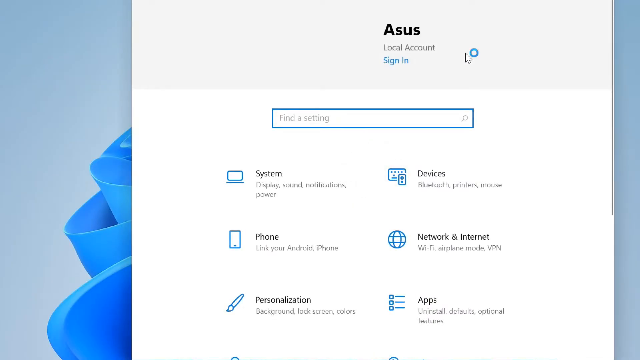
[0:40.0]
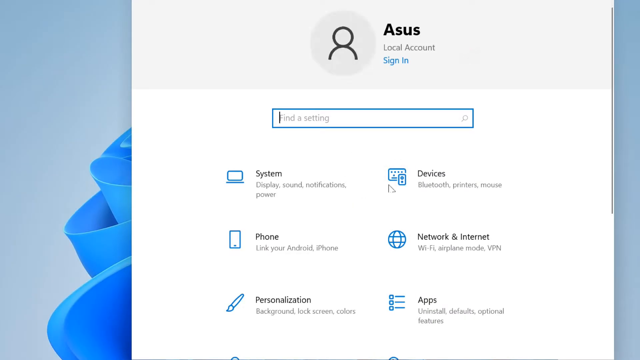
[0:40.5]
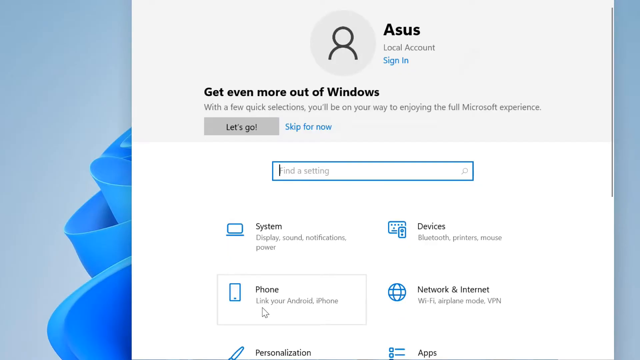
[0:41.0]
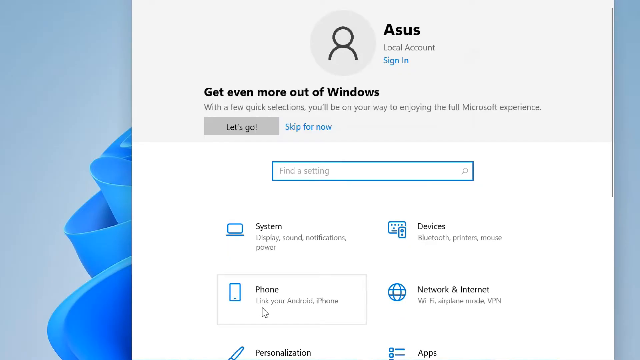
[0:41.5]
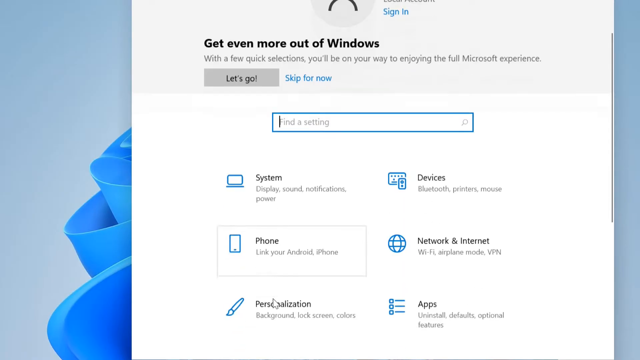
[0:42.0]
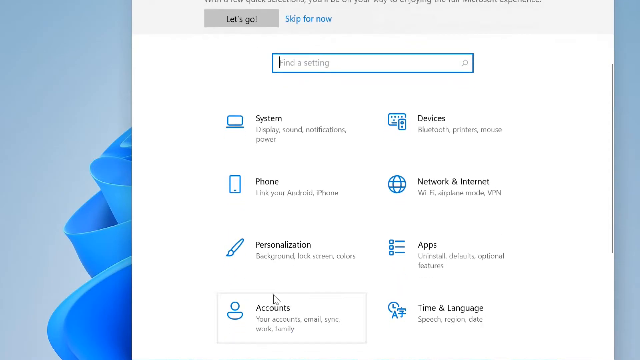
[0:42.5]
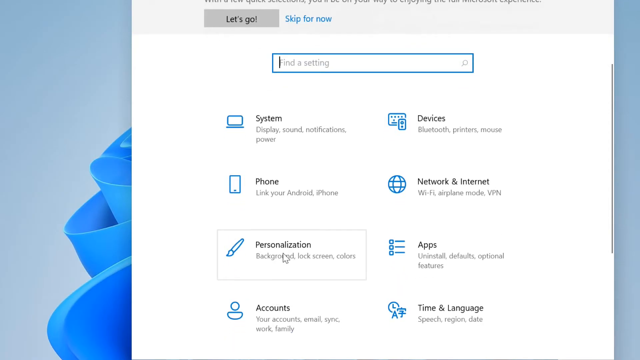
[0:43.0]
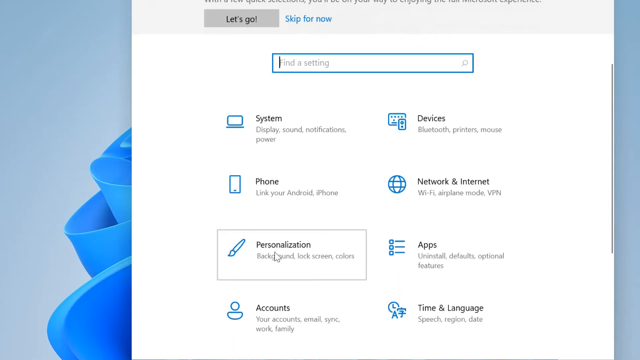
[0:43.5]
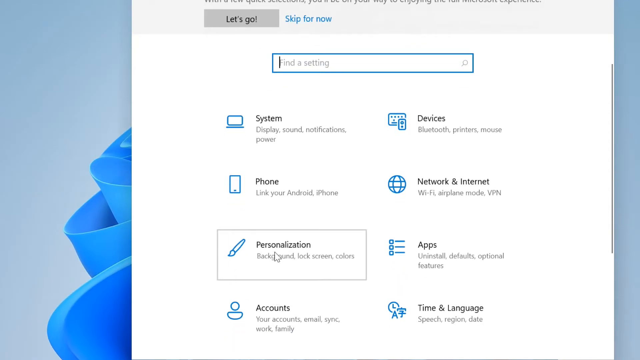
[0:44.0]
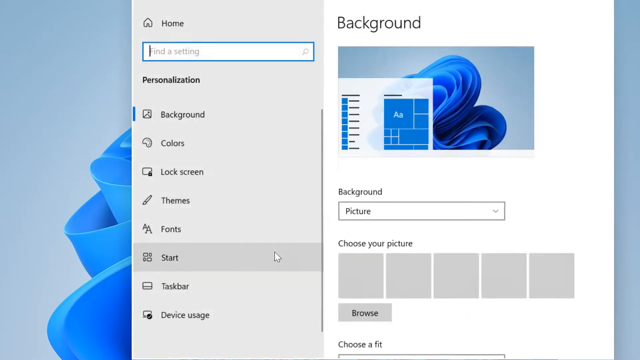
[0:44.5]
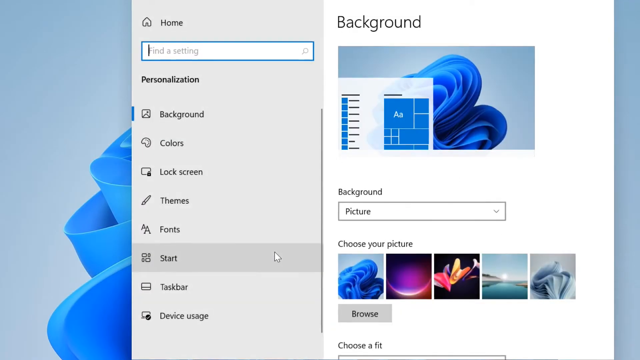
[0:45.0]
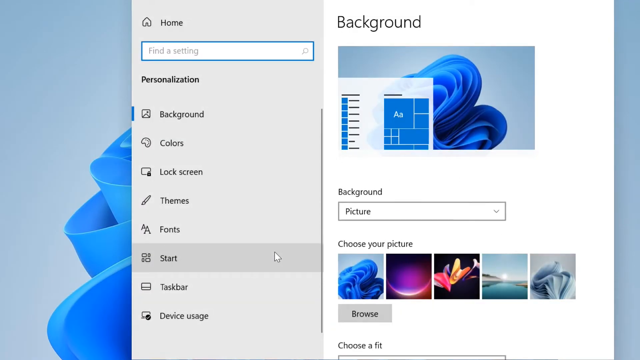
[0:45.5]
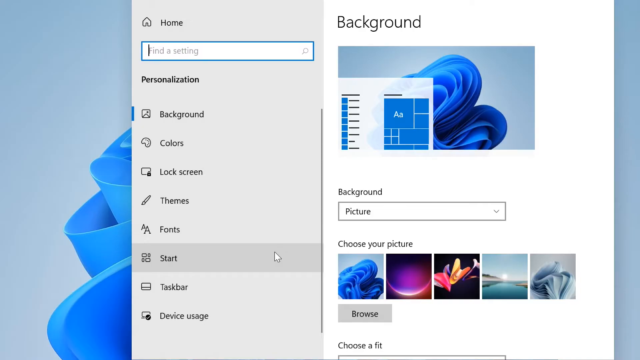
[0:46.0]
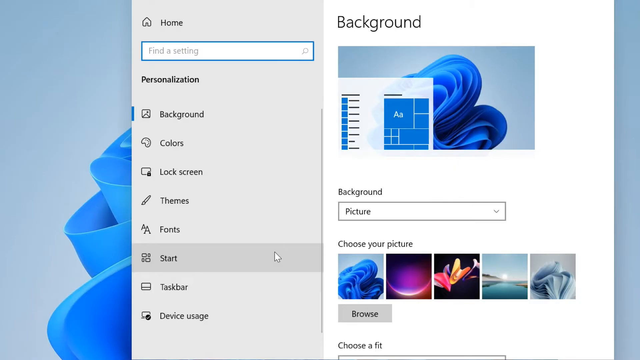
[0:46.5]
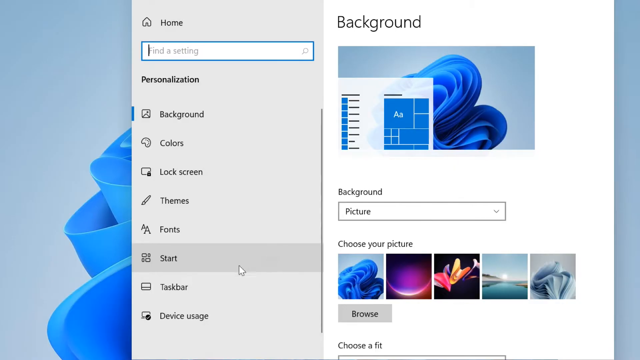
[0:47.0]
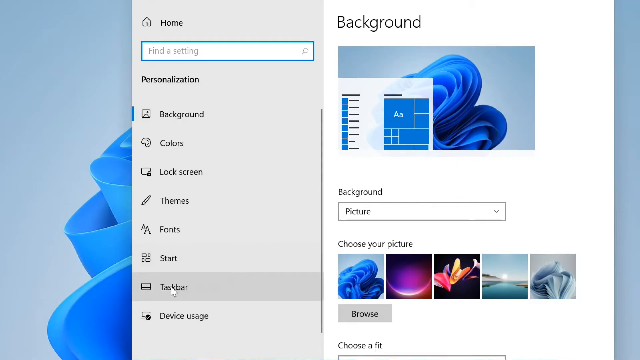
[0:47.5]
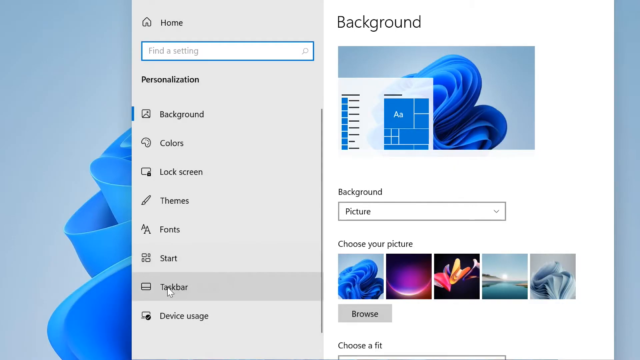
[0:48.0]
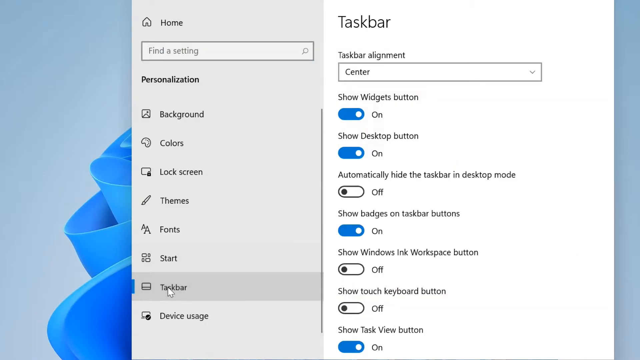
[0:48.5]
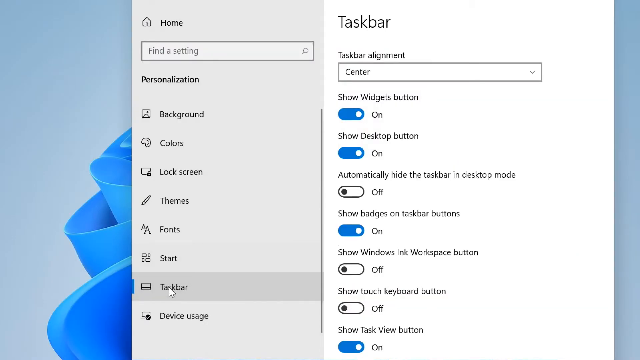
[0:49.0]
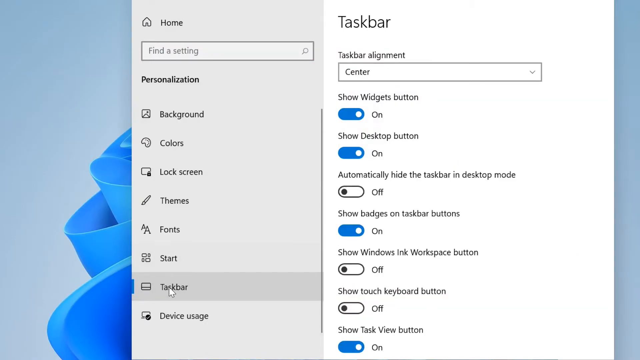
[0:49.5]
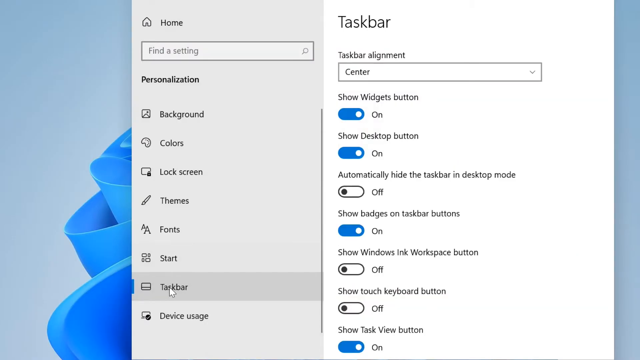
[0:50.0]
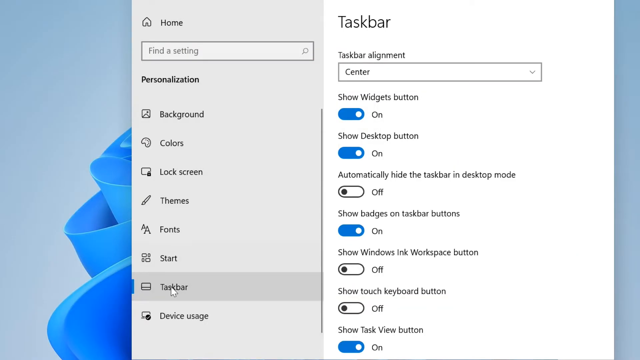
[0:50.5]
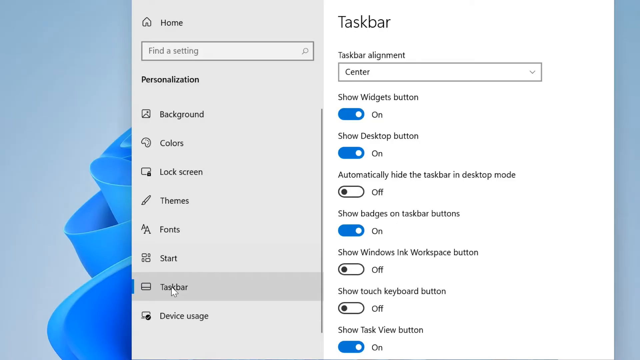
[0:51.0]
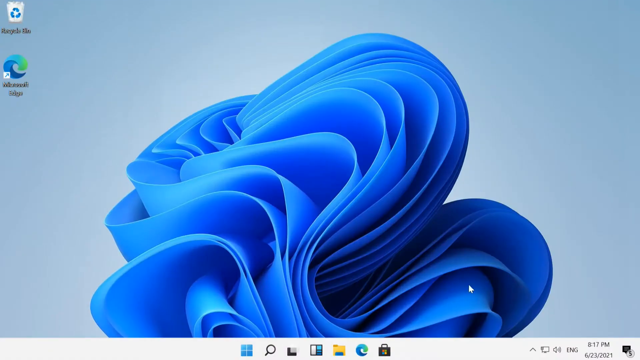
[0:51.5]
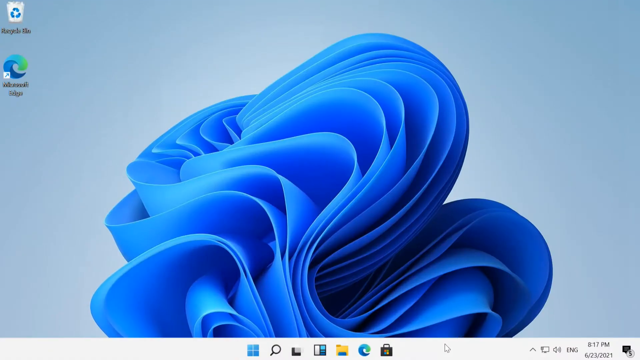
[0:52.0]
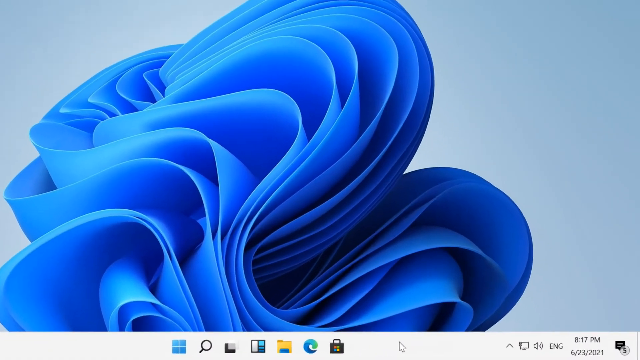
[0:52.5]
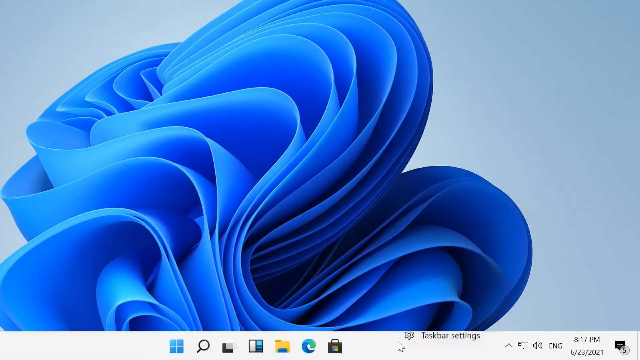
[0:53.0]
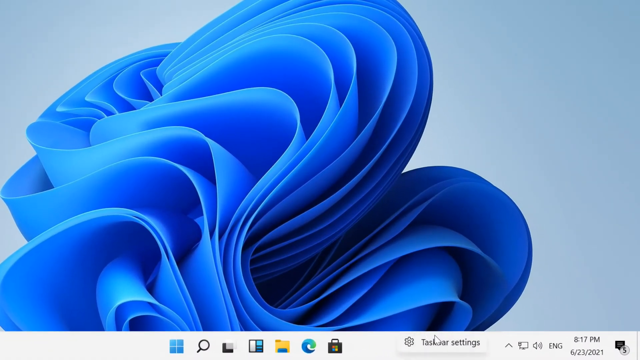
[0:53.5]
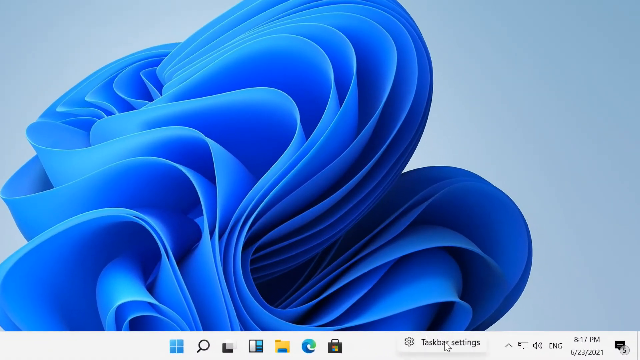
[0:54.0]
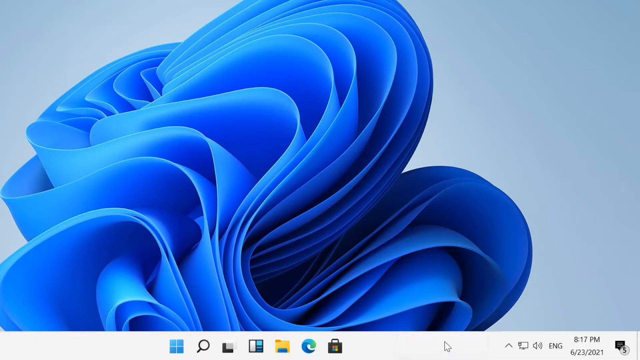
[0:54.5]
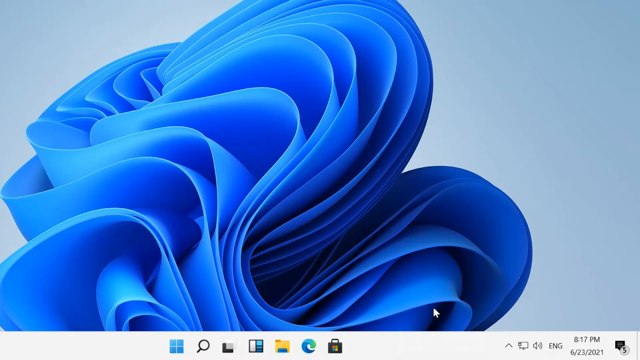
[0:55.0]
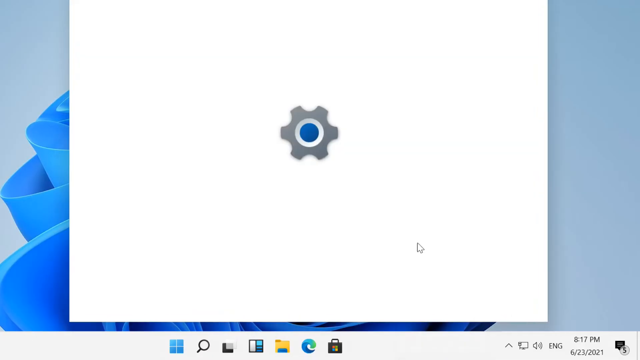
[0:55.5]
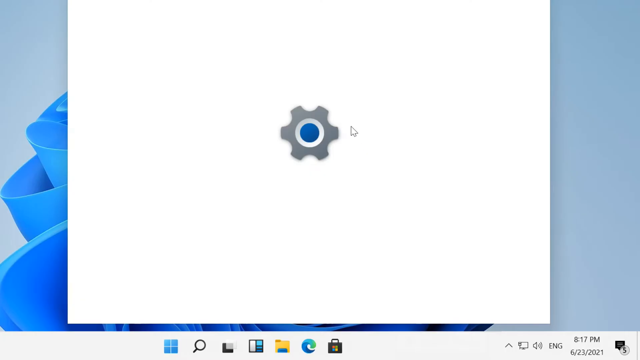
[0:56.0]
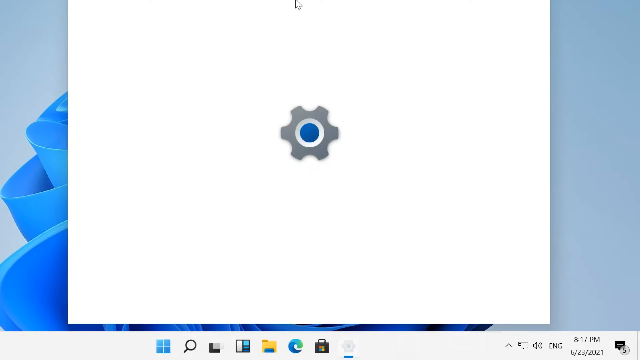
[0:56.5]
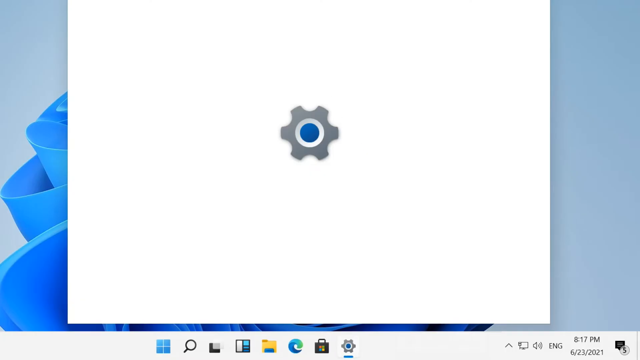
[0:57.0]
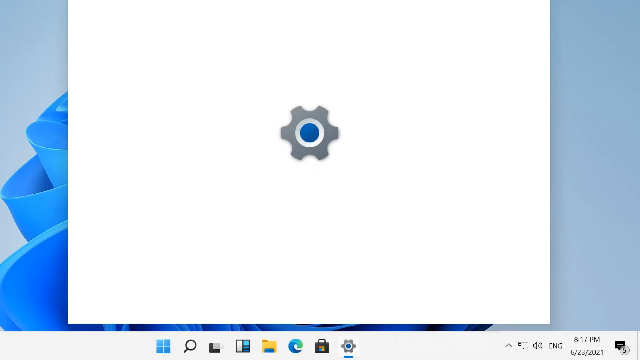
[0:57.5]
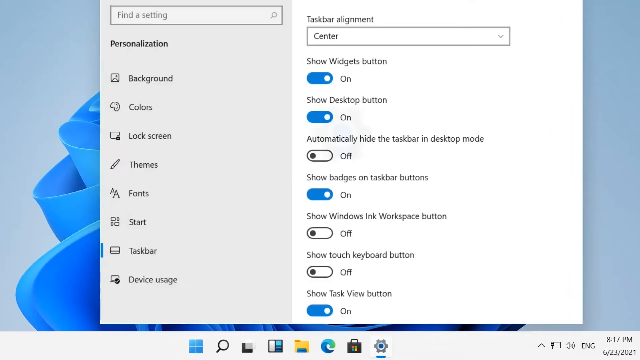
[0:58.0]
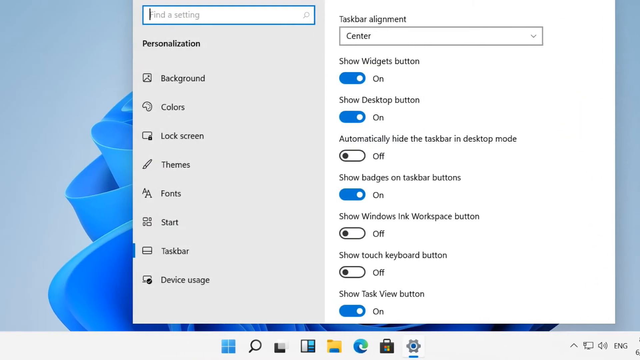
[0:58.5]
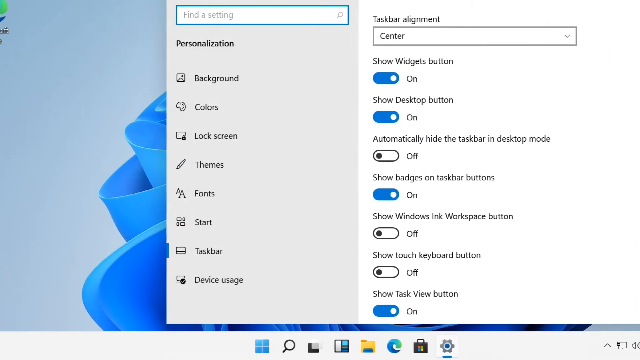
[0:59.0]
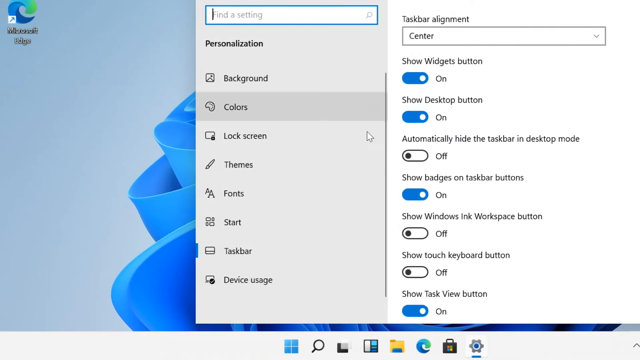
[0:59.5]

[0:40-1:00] The Settings window shows a default profile logo with a black circle and a curved half circle indicating a person, black letters reading "asus," "local account" underneath, and a blue "sign in" underneath that. Black letters under the profile photo read "get even more out of windows," and a blue rectangular search box says "find a setting." The user scrolls down the settings and selects a rectangle with a paintbrush that says "personalization." A pop-up box appears. The left side of the screen says "home," with a "find a setting" search button, a "Personalization" heading, and subheadings including background, colors, lock screen, themes, fonts, start, taskbar and device usage. The right half of the screen is a background setting showing the picture of the light blue background with the darker blue ribbons. Under the background personalization there is an option to search the computer and insert one's own picture. The screen then transitions back to the original desktop background, and the camera zooms in to the right side, where there is now a shortcut to access taskbar settings.